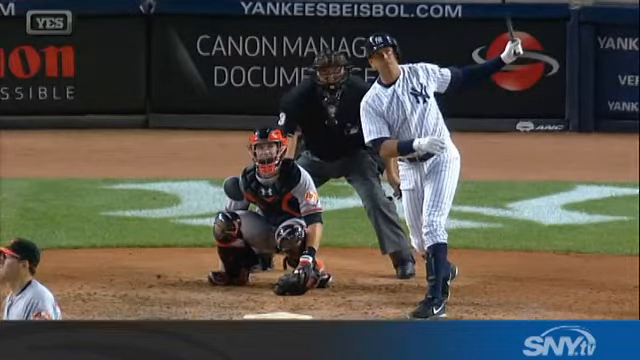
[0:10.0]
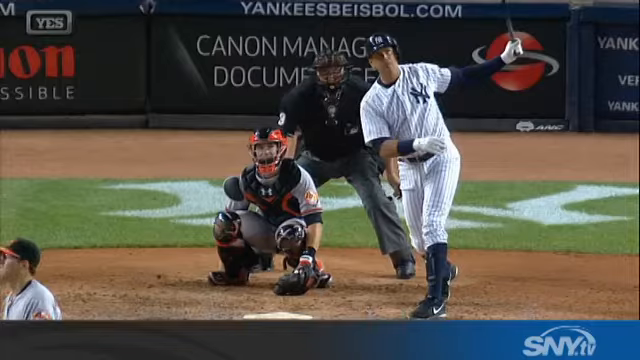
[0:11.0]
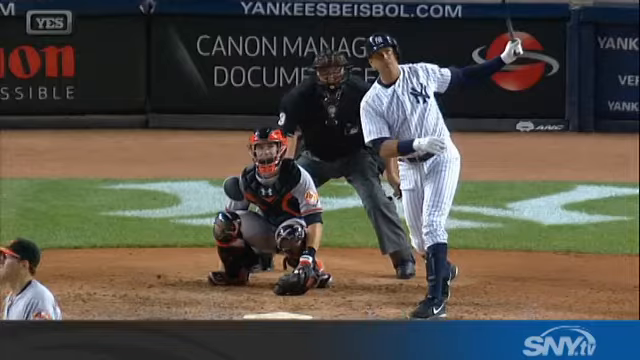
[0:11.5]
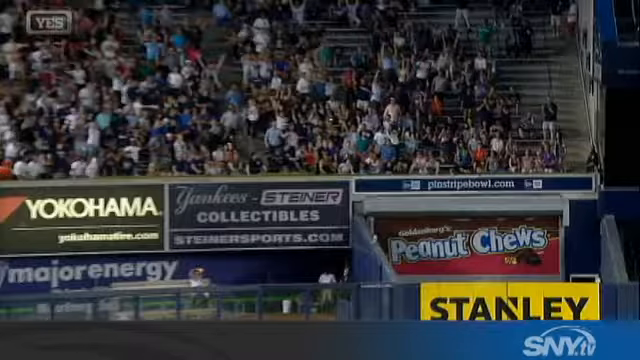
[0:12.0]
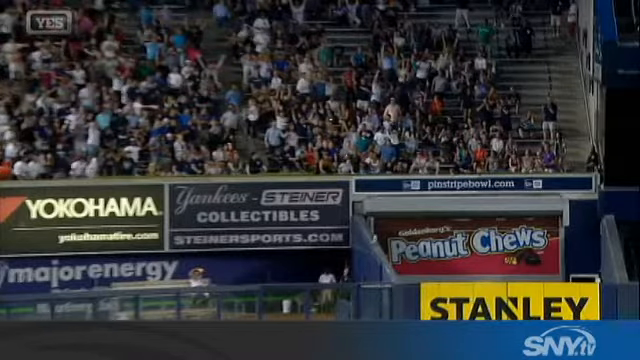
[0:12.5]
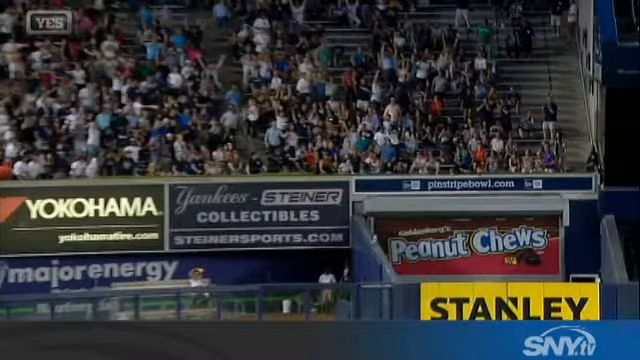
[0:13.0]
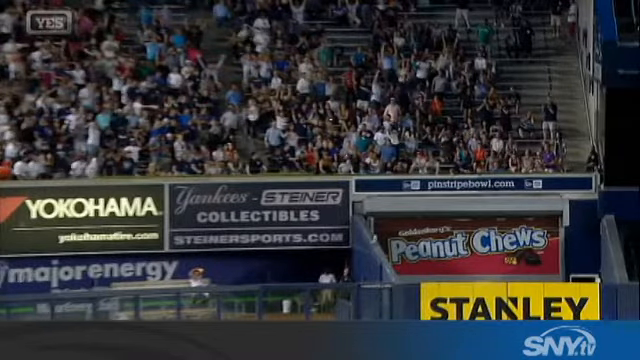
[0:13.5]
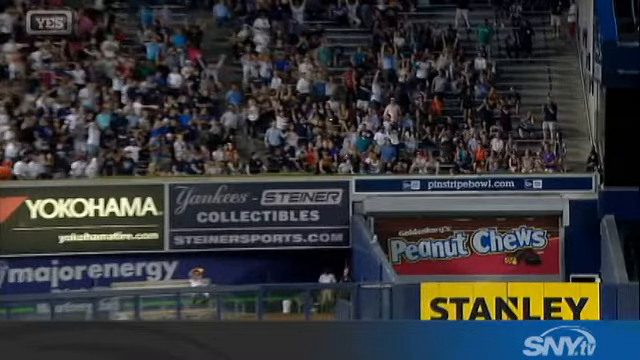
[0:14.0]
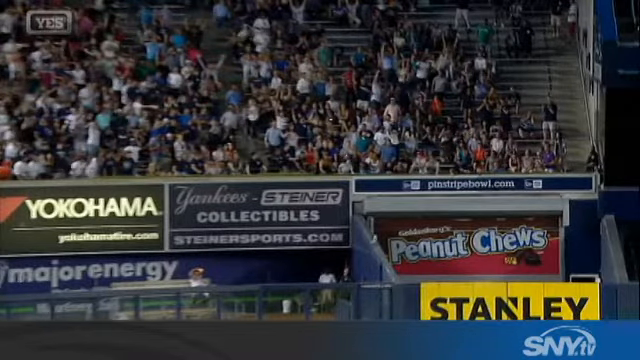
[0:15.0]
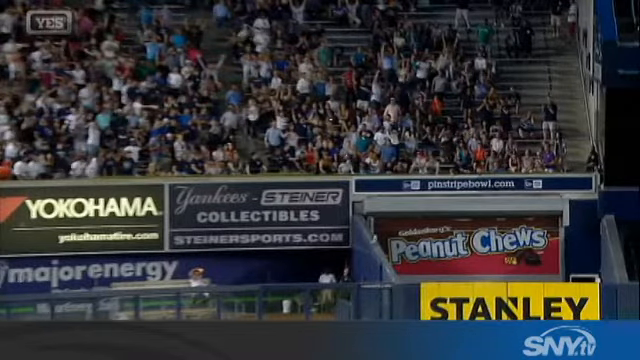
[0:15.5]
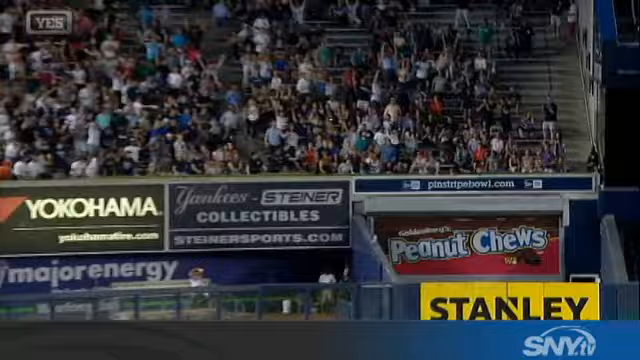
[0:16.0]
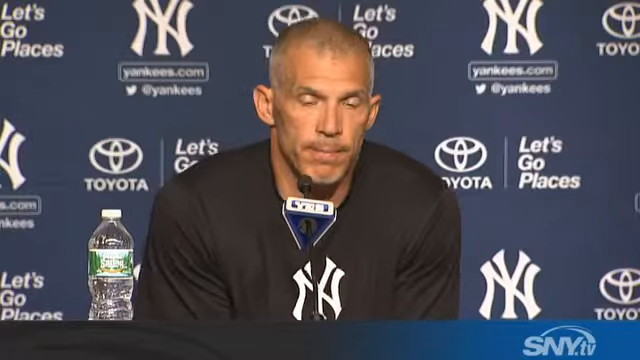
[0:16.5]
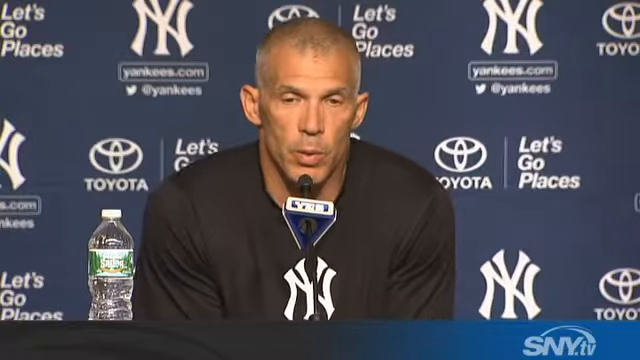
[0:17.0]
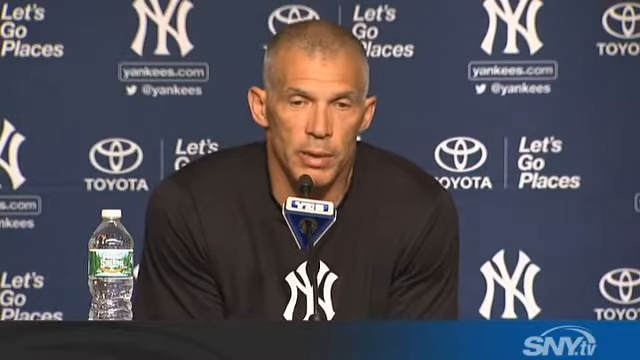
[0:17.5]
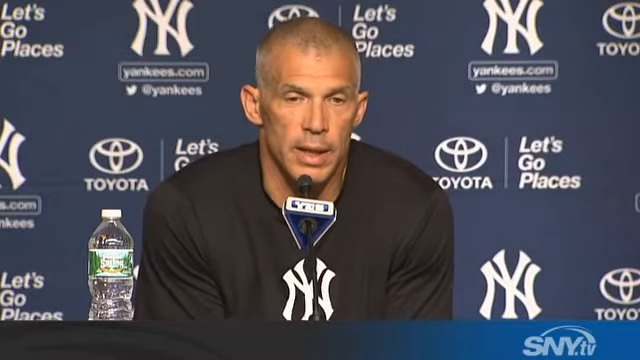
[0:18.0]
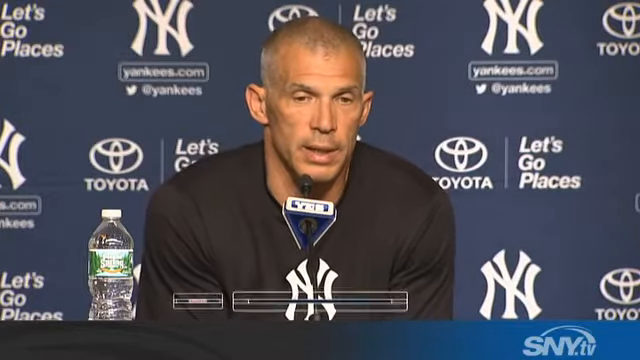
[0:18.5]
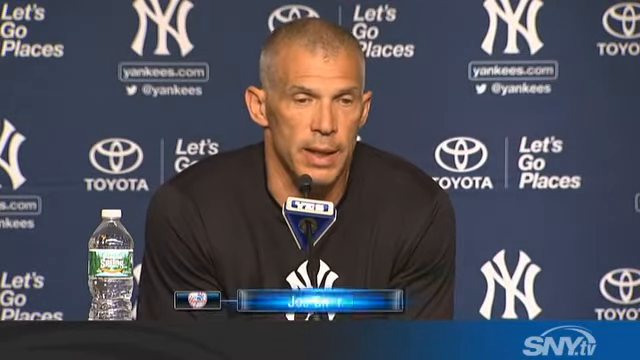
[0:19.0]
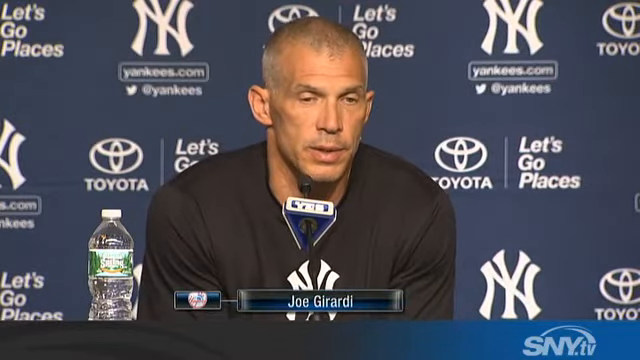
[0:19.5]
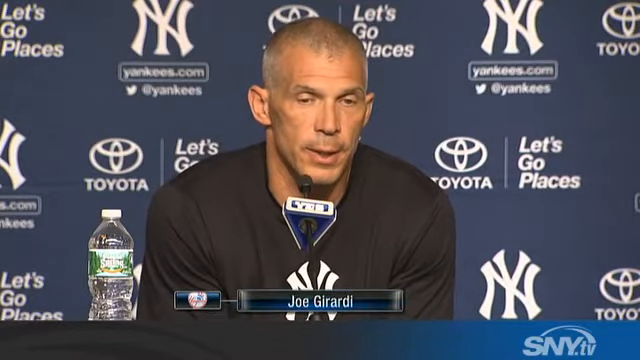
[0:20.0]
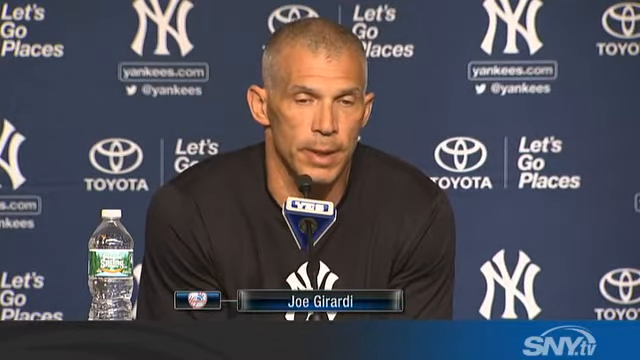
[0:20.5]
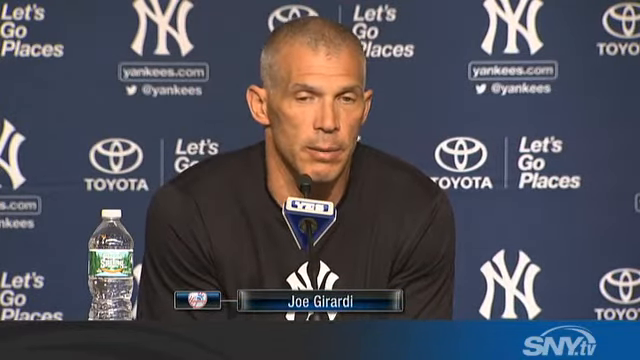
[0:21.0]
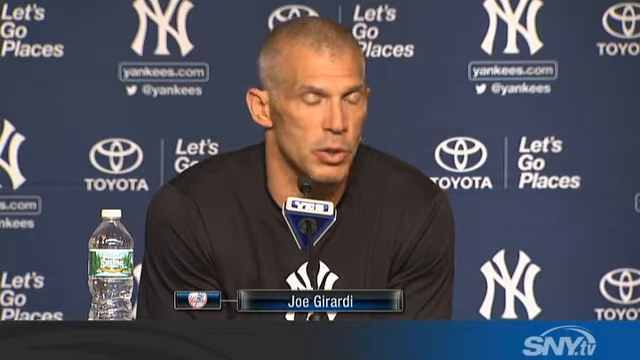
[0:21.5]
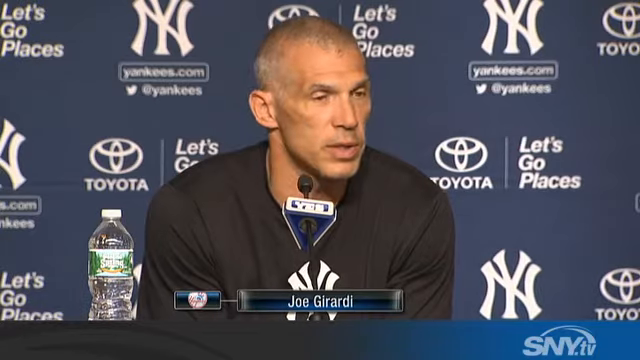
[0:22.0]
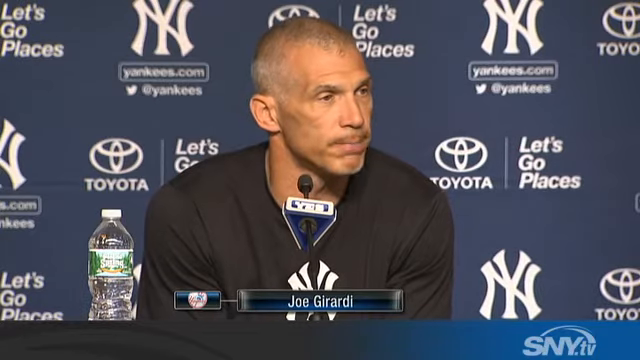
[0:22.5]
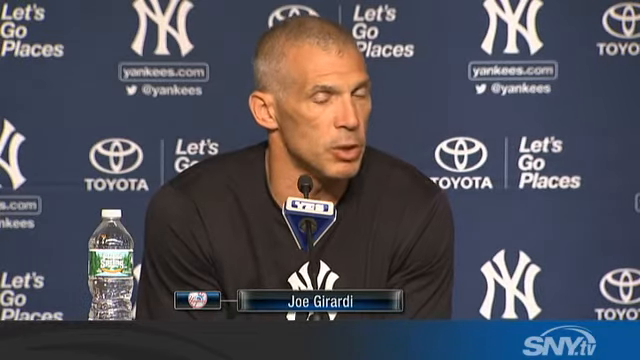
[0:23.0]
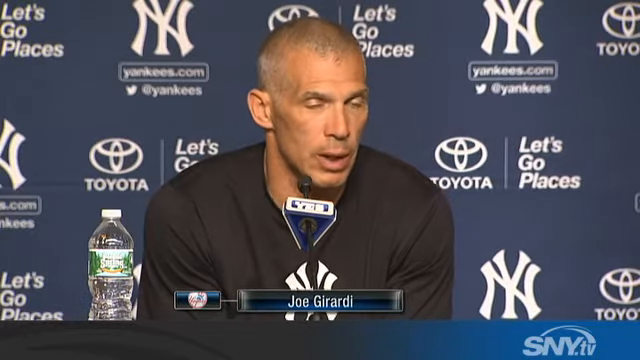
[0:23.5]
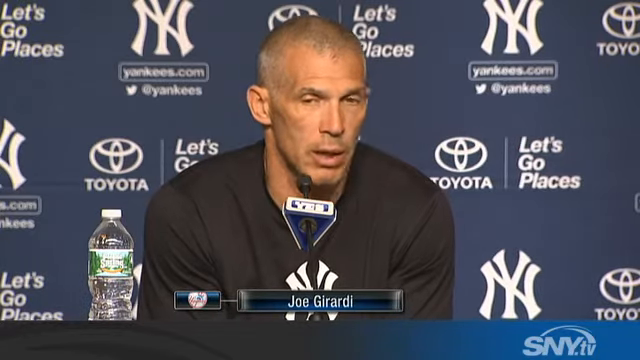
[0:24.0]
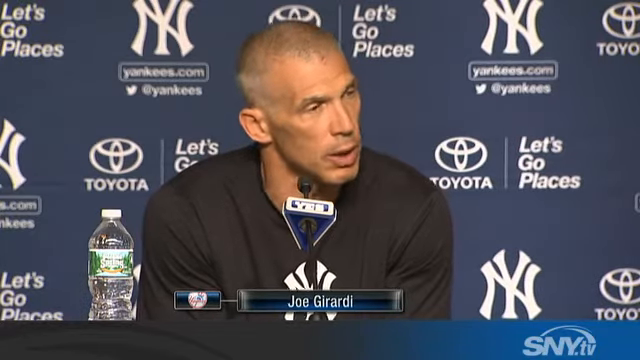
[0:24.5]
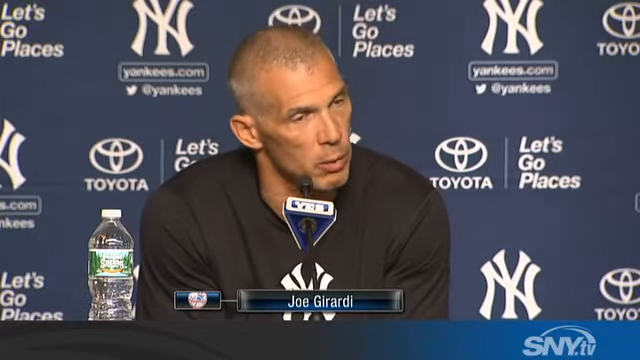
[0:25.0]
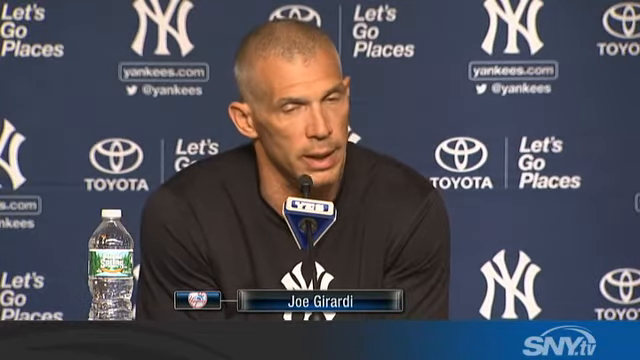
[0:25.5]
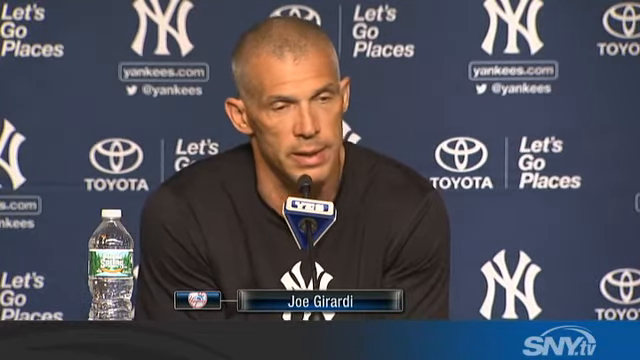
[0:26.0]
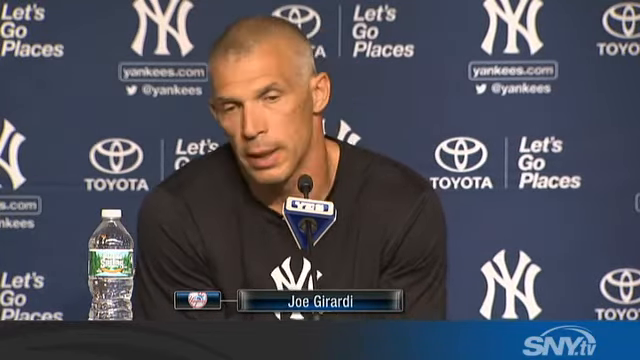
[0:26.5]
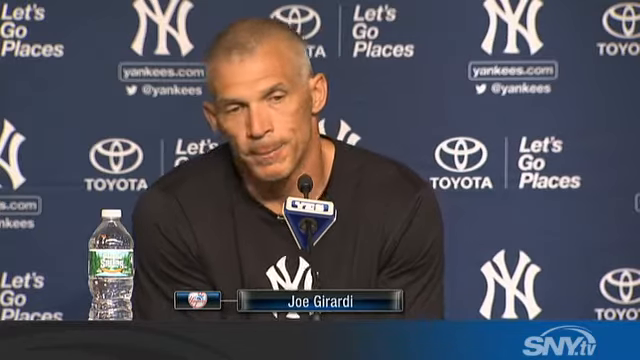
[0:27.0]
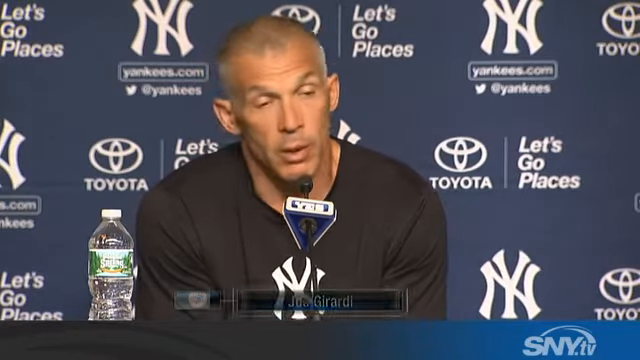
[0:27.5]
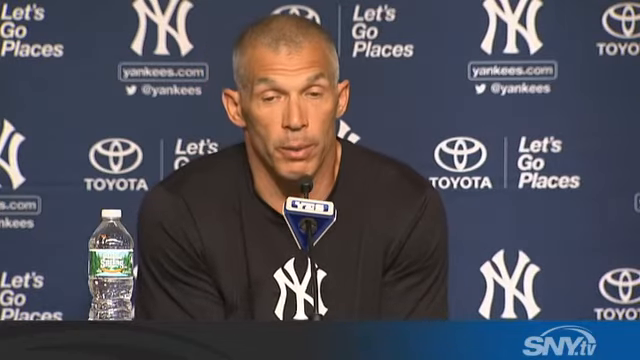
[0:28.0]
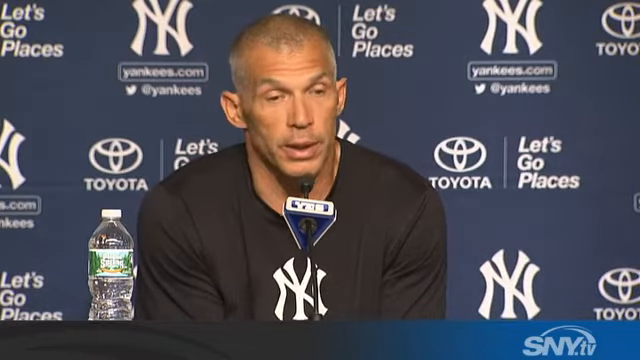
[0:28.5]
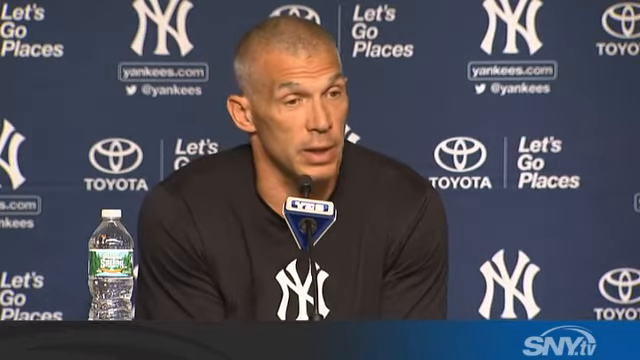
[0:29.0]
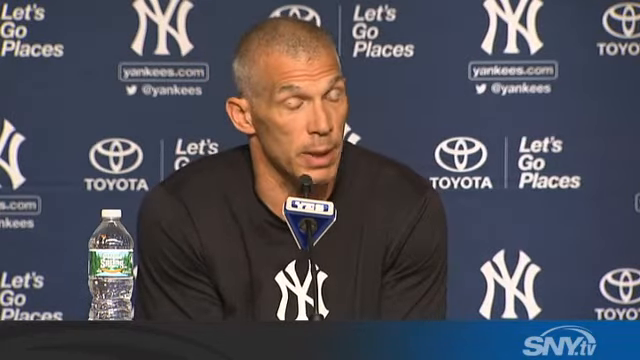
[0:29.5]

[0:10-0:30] The New York Yankees appear to be playing a team whose main color is orange. Pictures of different companies appear, including Yokohama, Major Energy, and Peanut Chews, whose image looks like a rectangular chocolate, along with text reading "Stanley." Then what looks like a post-game conference appears, with an older gentleman, possibly a coach or team lead. Poland Spring water is on the right side of the screen, to his left. A Yankees symbol is behind him, along with Toyota and "Let's Go Places." His name is Joe Girardy. He turns toward the right side of the screen, apparently talking to that corner.